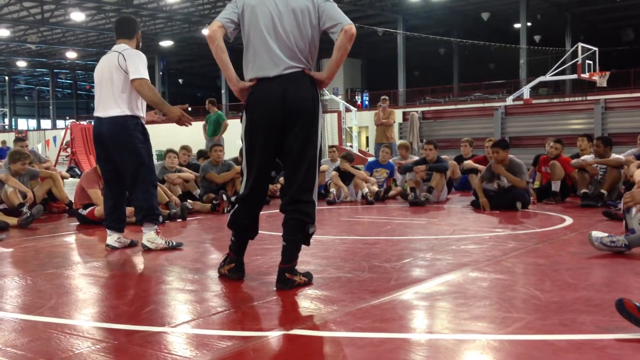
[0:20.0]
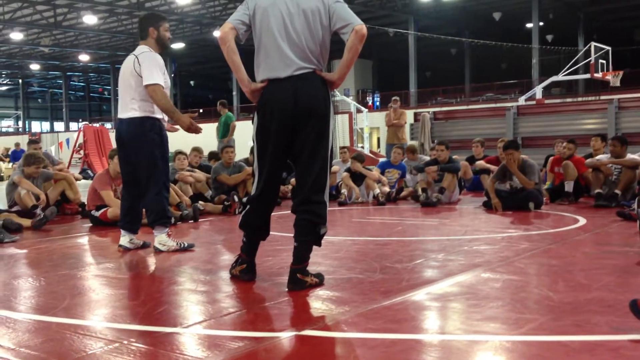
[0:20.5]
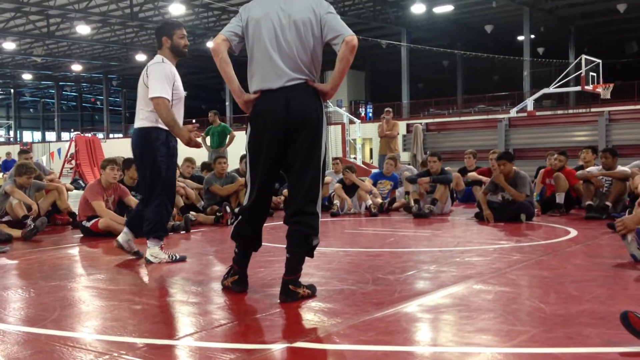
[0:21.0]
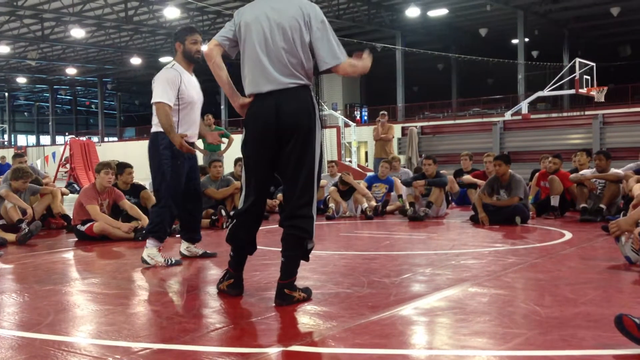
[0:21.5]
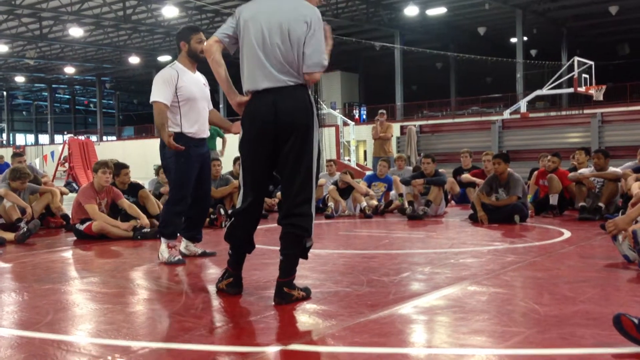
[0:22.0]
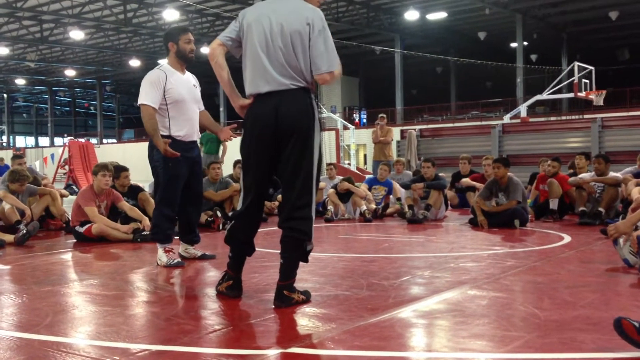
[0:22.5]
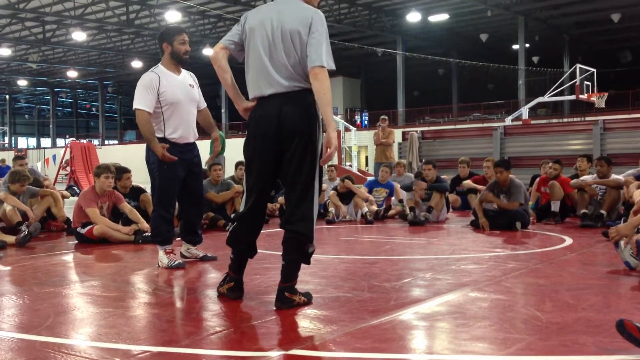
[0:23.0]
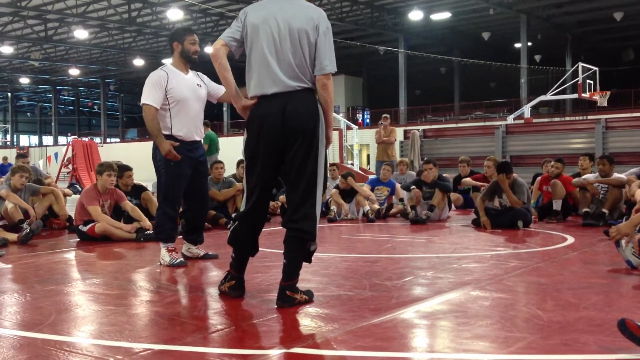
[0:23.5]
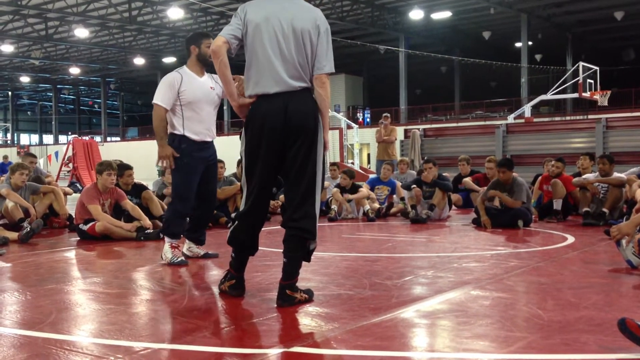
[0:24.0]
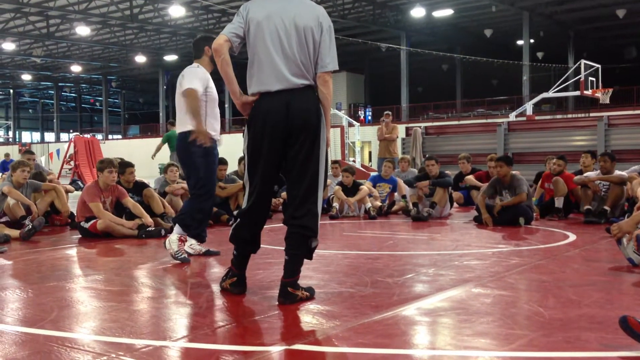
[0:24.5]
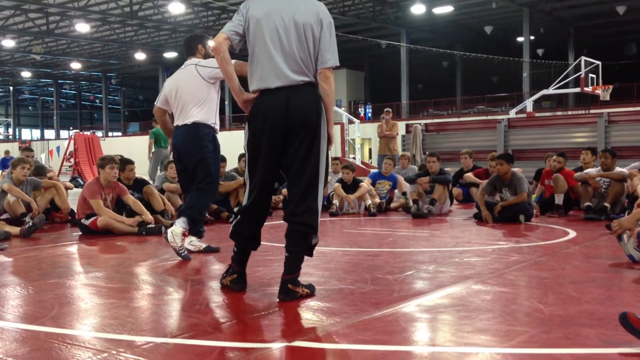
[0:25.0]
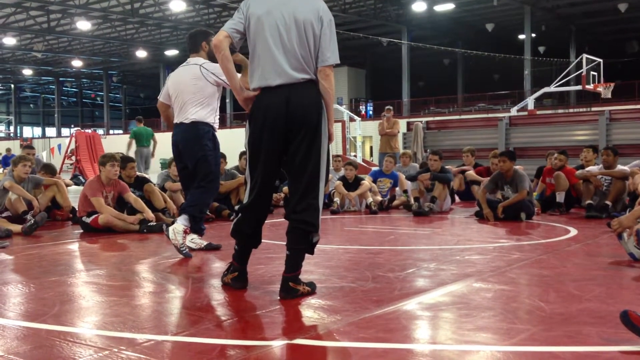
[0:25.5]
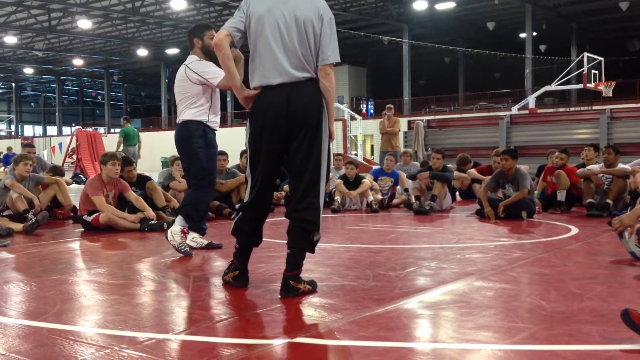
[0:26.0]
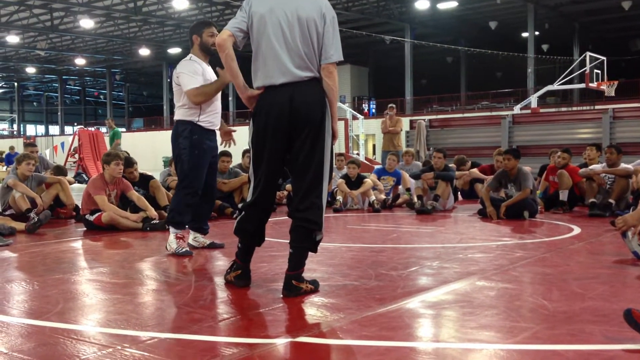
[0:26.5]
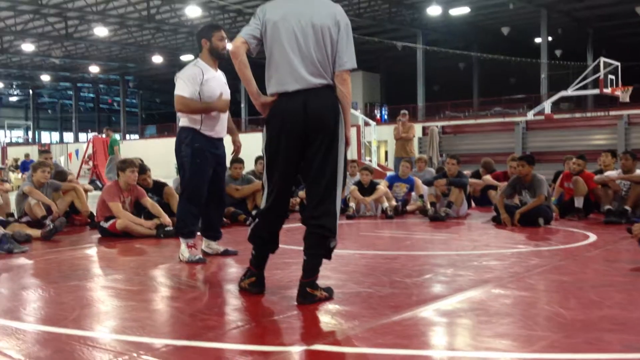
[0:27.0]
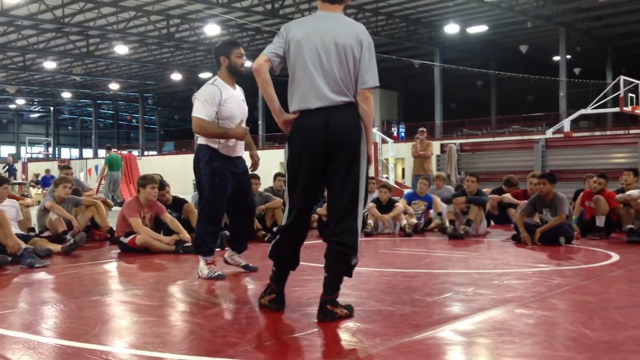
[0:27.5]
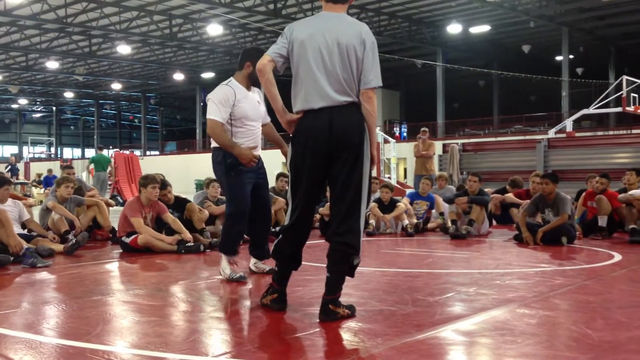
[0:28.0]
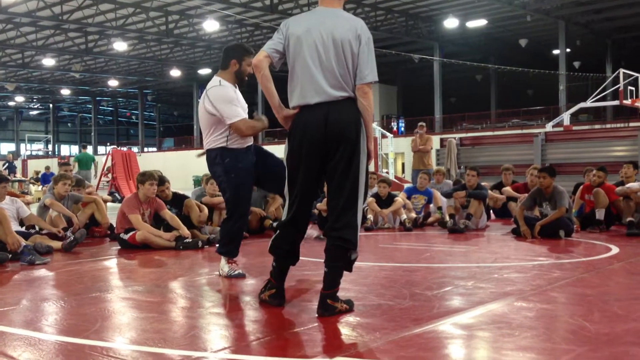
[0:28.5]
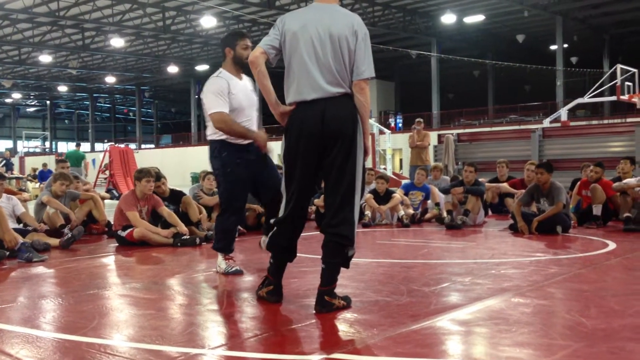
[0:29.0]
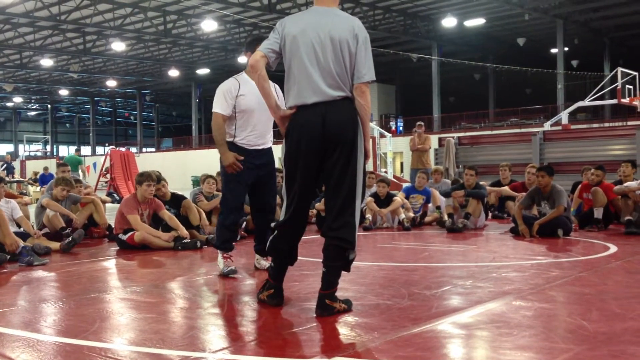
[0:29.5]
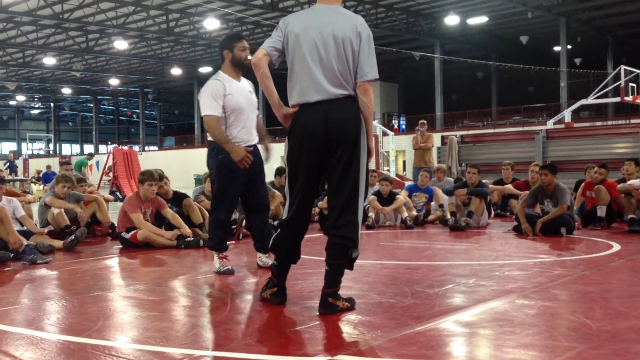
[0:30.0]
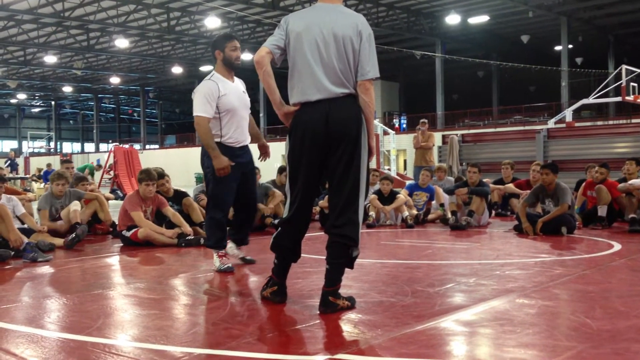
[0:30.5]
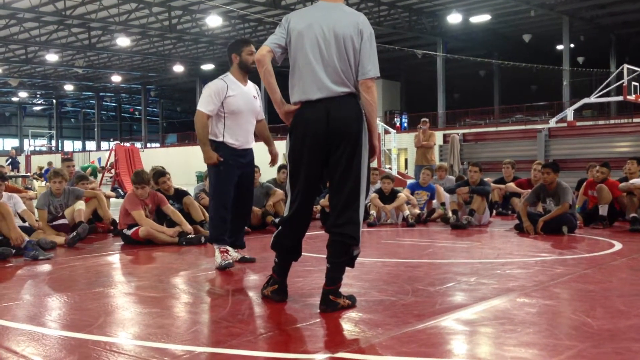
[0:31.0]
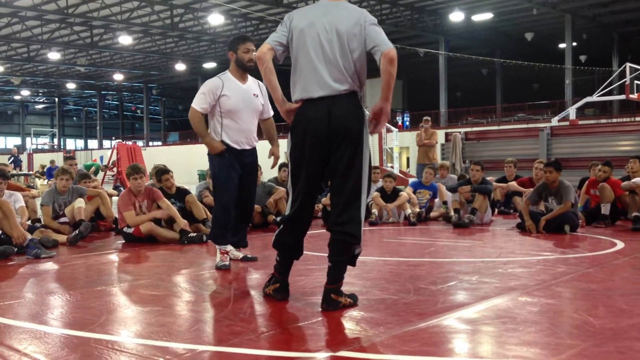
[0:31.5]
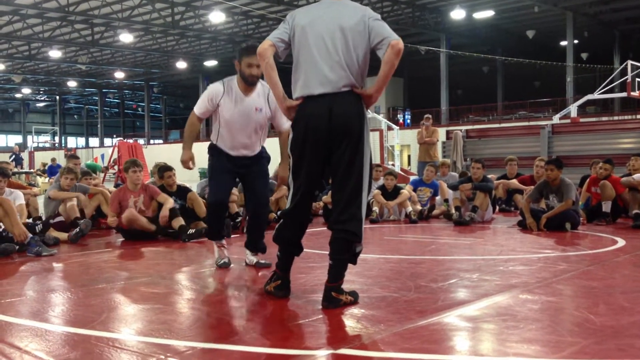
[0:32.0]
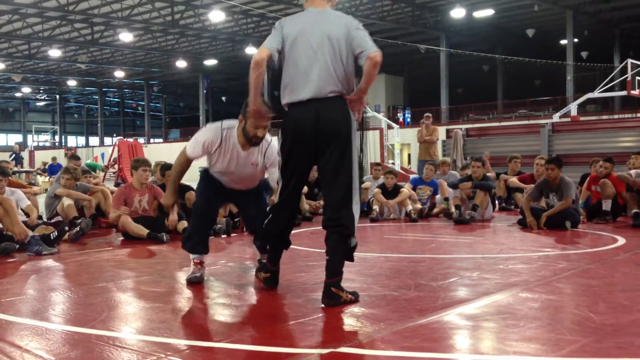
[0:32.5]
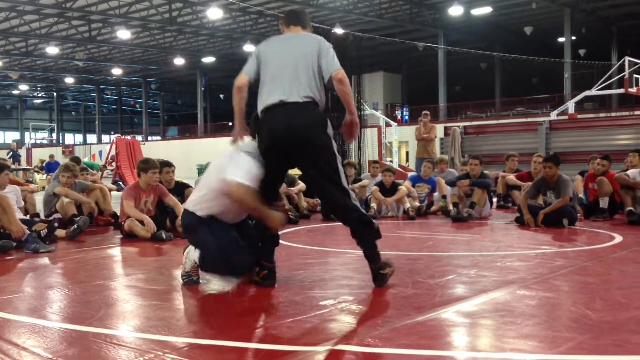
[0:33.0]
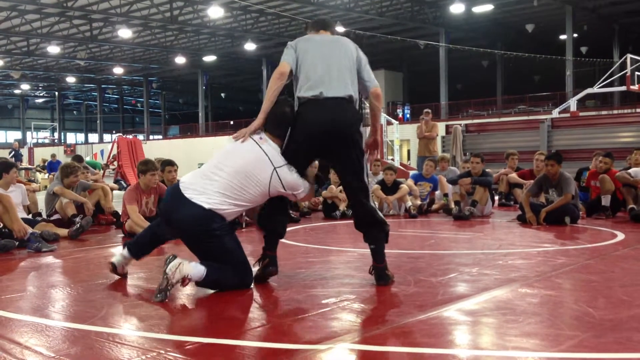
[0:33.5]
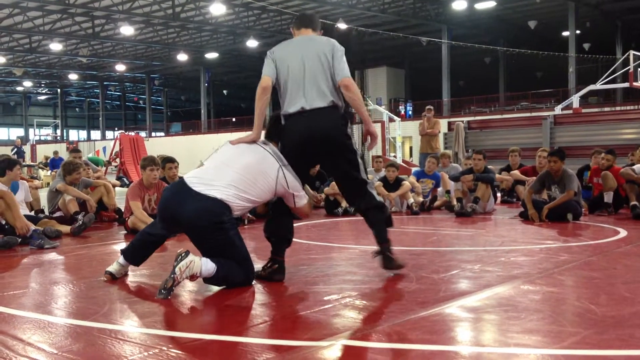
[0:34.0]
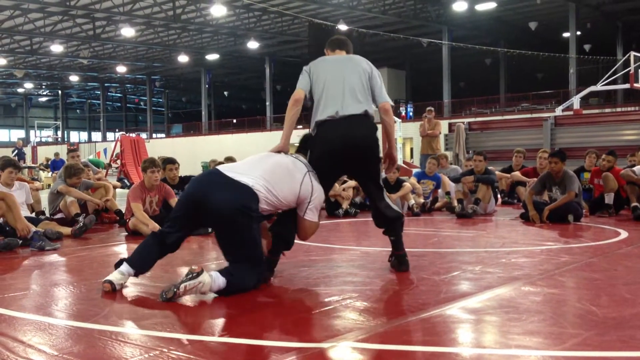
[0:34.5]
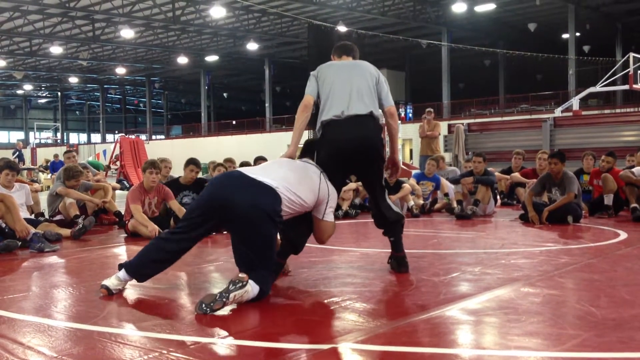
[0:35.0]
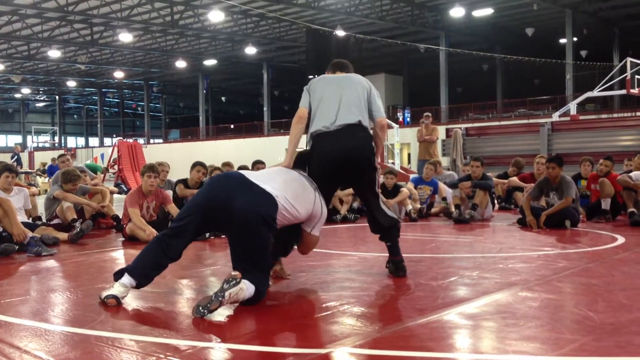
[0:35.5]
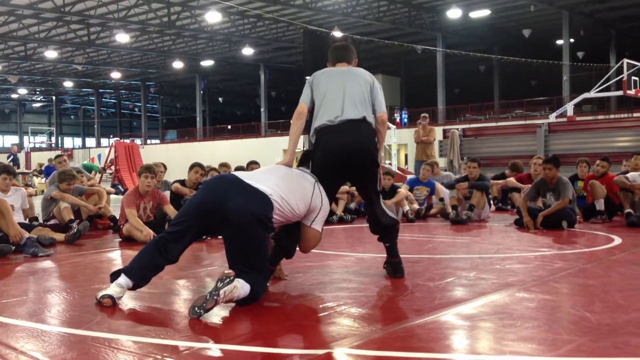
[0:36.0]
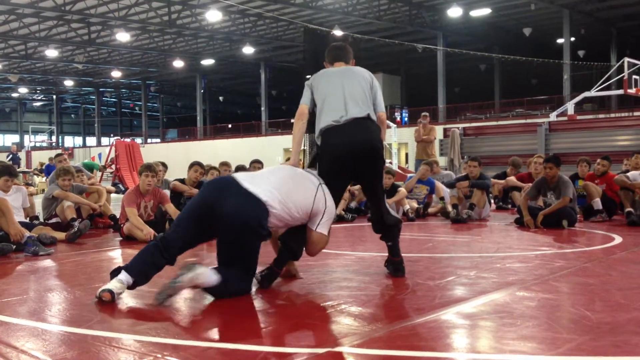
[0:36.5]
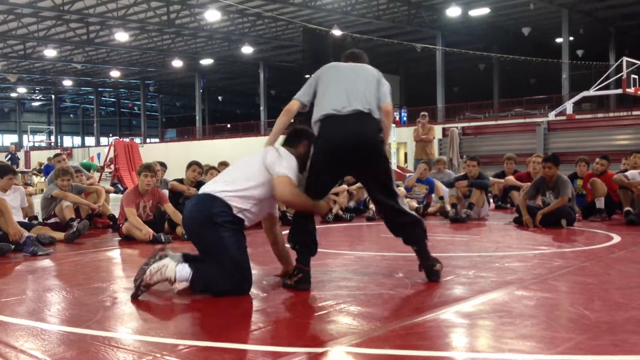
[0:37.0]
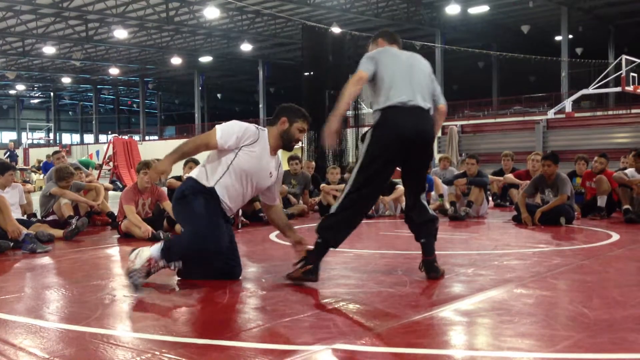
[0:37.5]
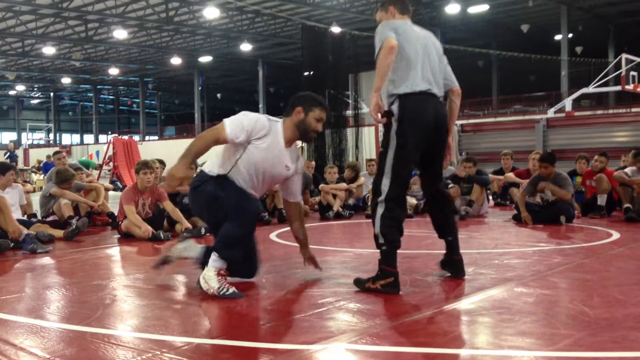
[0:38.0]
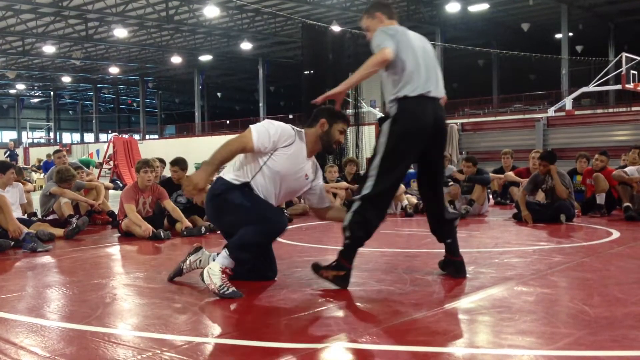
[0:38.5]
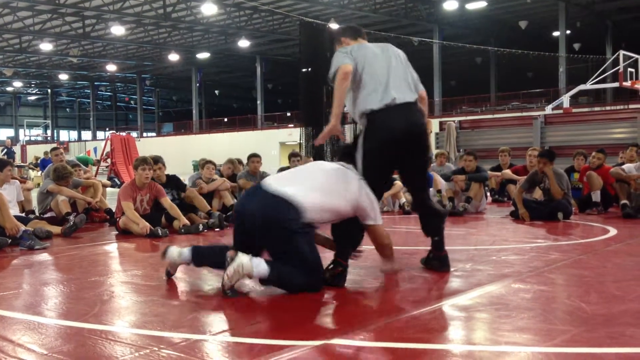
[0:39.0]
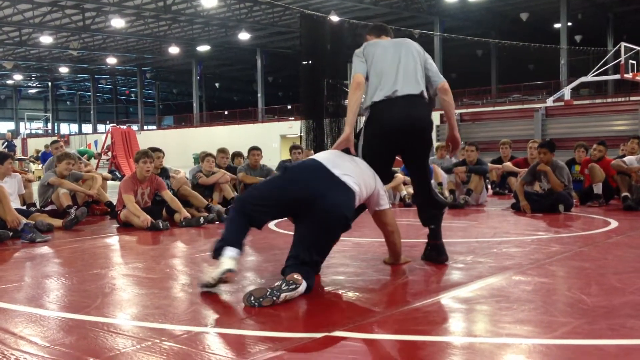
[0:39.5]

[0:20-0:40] The teenage boys continue to surround the two men in the middle of the gym, who are talking animatedly. There also seem to be two adult men behind the circle of boys: one, in a mustard-colored t-shirt, seems to be recording with a handheld video camera held up to his face, while the other, in a green t-shirt, has his hands on his hip and is looking in another direction. The man in the gray shirt makes actions with his right arm, bending at the elbow, pulling his closed fist toward his chest and pulling his elbow down at the same time. The man in the white shirt mimics the movement and also kicks out with his right leg. He then moves closer to the man in grey and begins what looks like a wrestling technique, lowering his body and grabbing the grey man by his left lower leg. They separate but come back together in the same position, and this time the man in white pushes off with his leg extended, moving the man in grey.